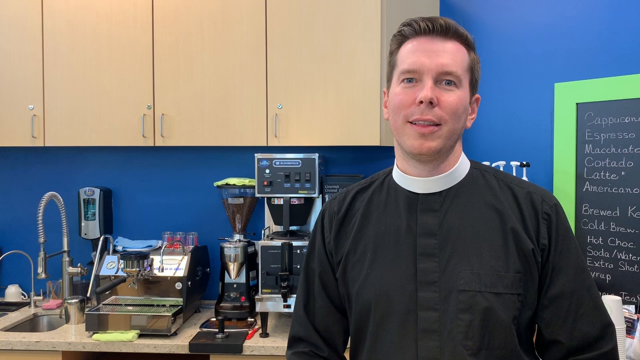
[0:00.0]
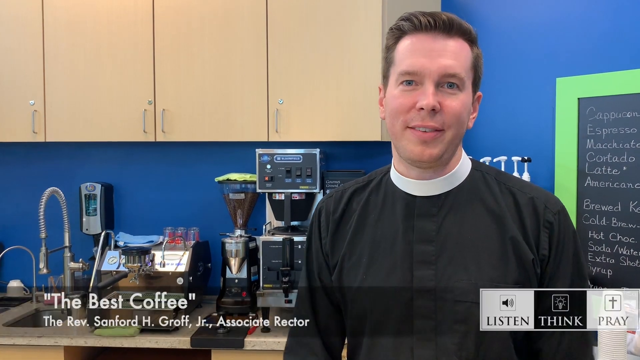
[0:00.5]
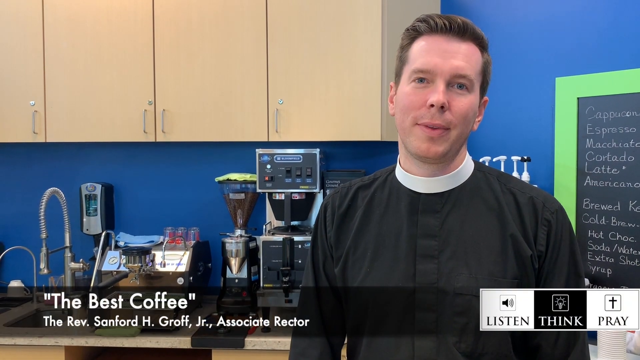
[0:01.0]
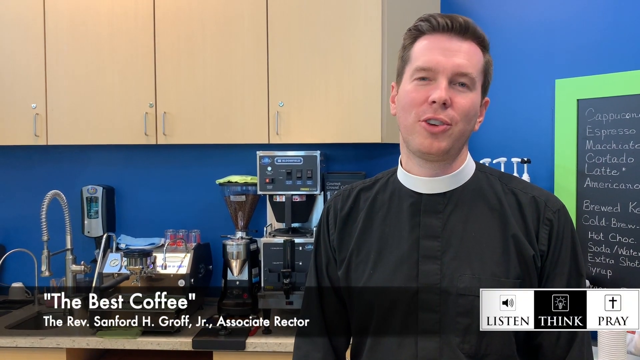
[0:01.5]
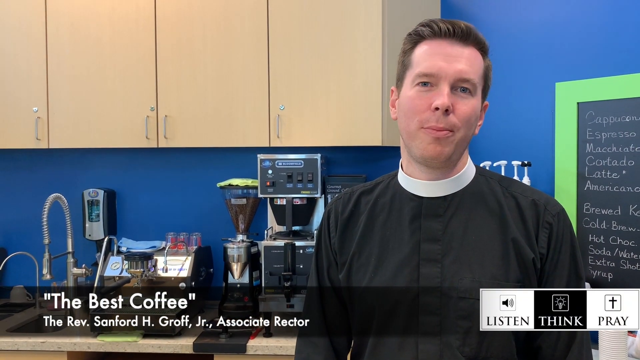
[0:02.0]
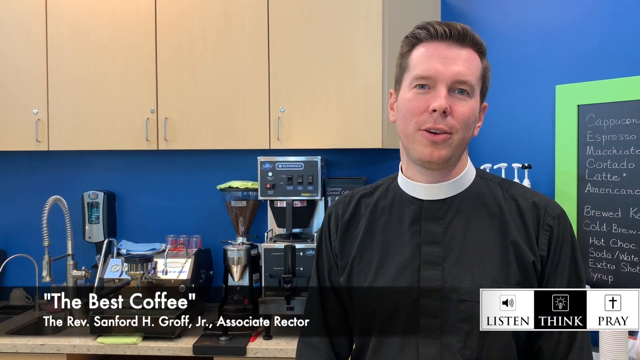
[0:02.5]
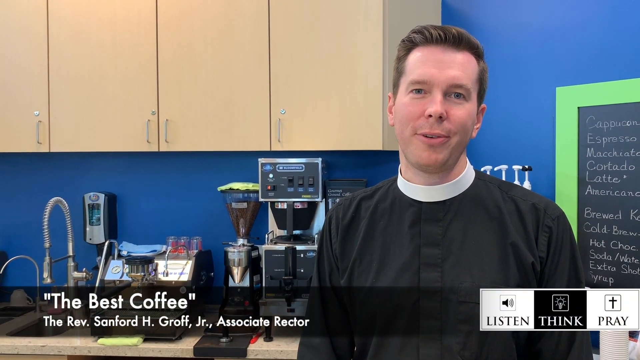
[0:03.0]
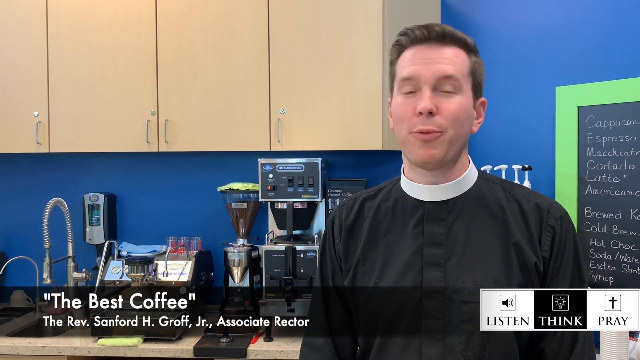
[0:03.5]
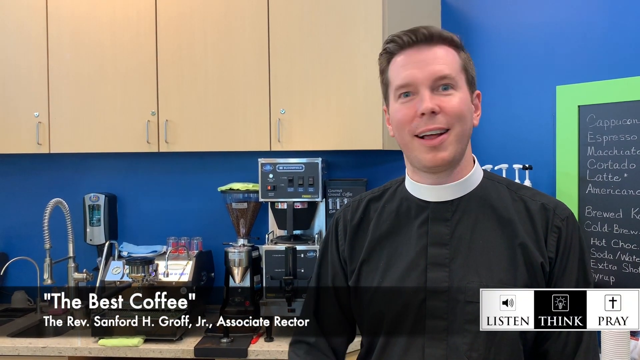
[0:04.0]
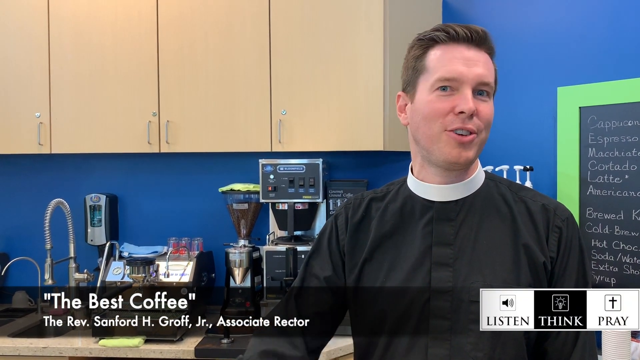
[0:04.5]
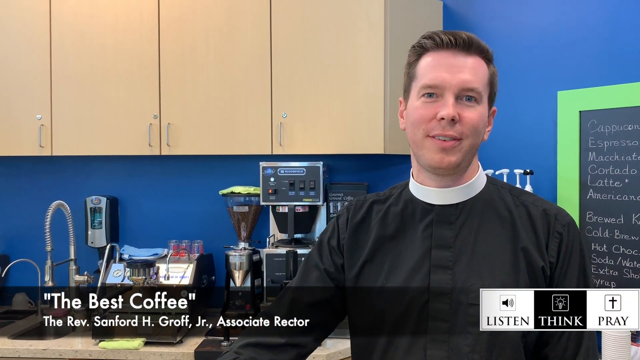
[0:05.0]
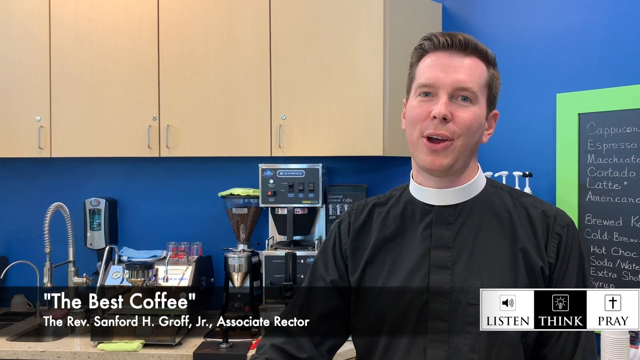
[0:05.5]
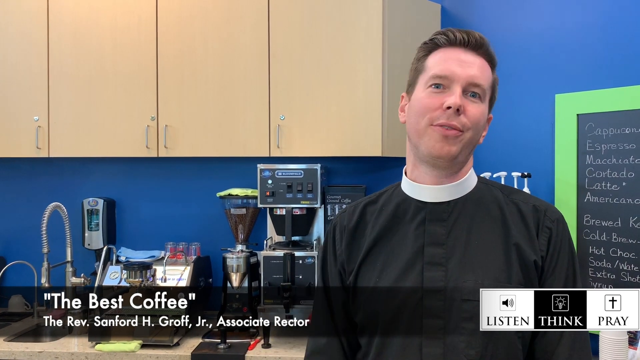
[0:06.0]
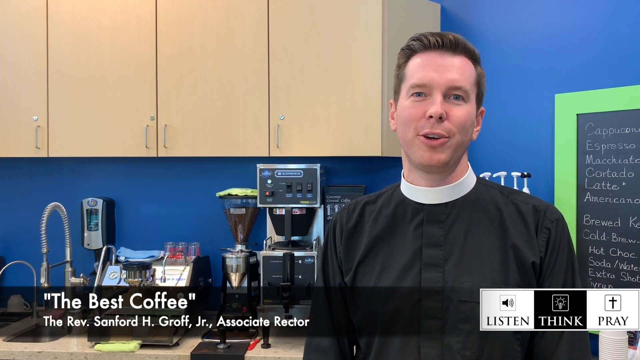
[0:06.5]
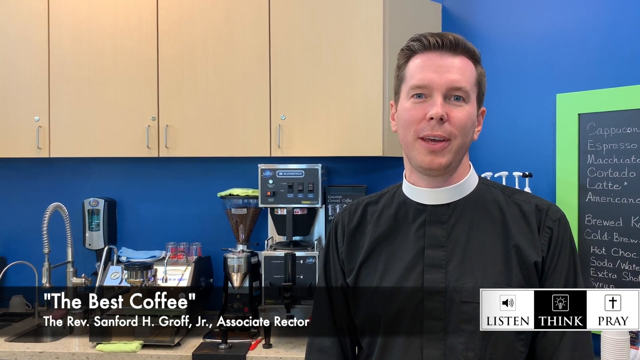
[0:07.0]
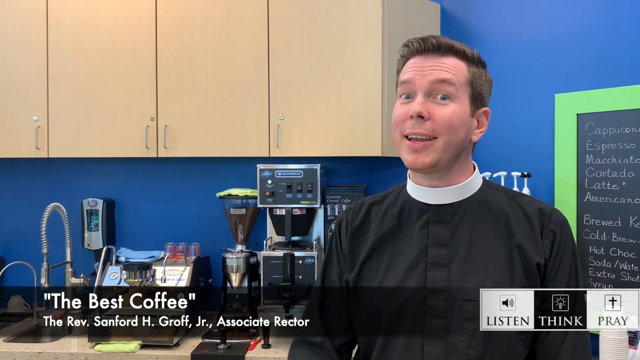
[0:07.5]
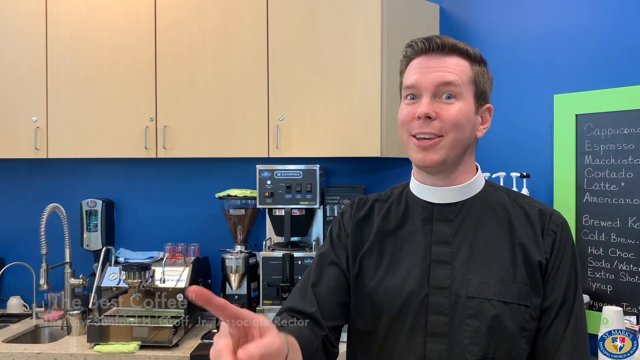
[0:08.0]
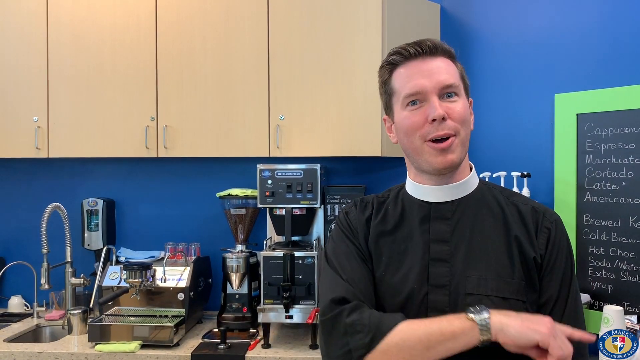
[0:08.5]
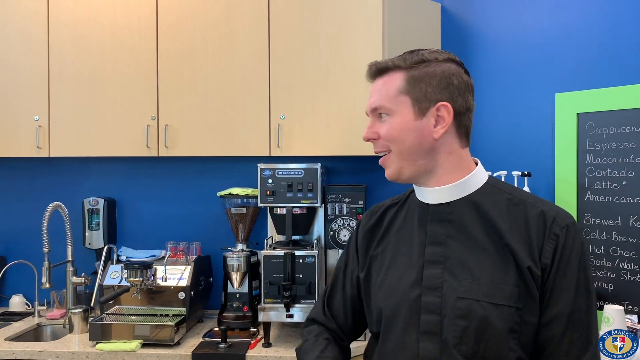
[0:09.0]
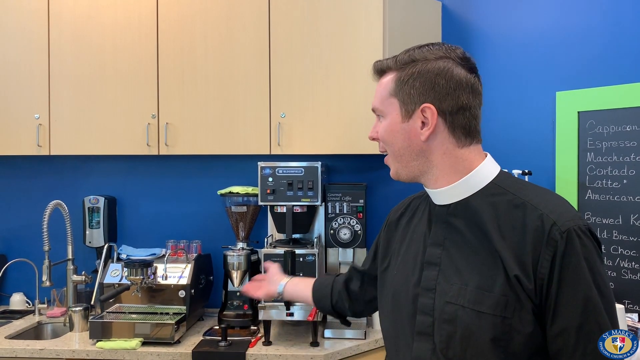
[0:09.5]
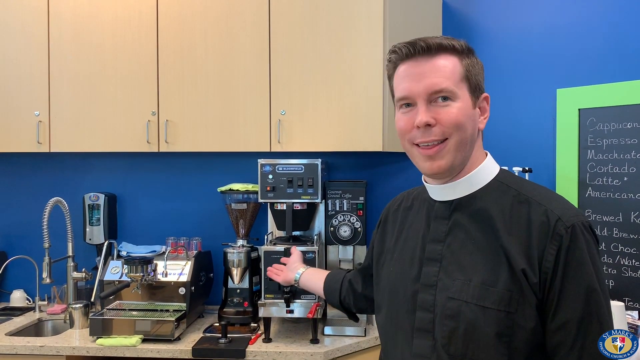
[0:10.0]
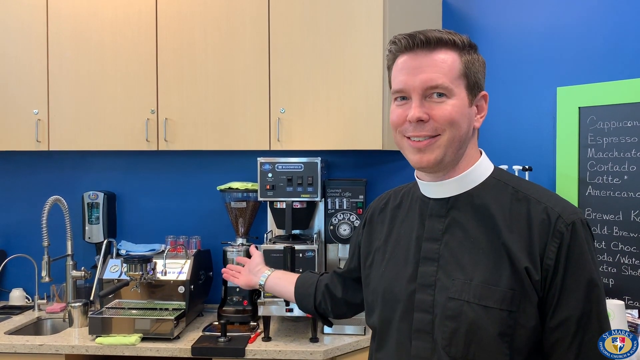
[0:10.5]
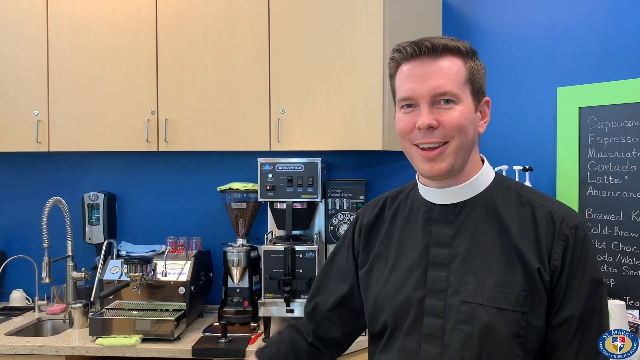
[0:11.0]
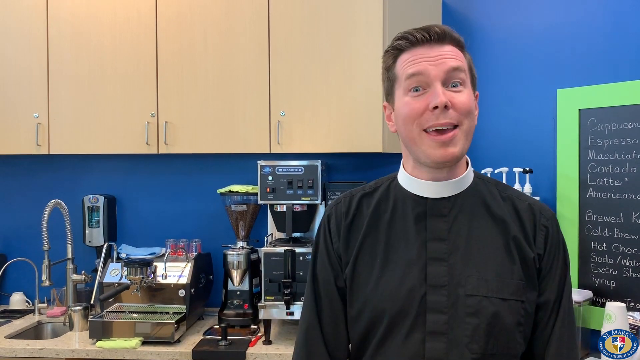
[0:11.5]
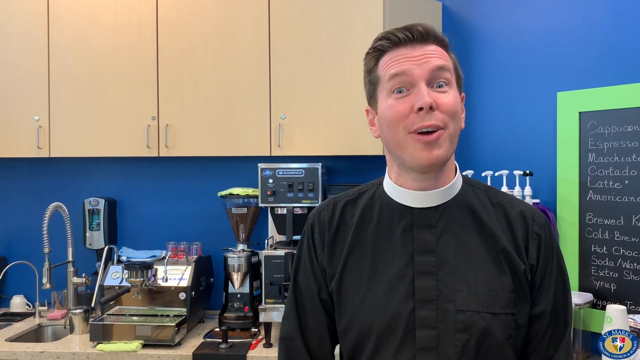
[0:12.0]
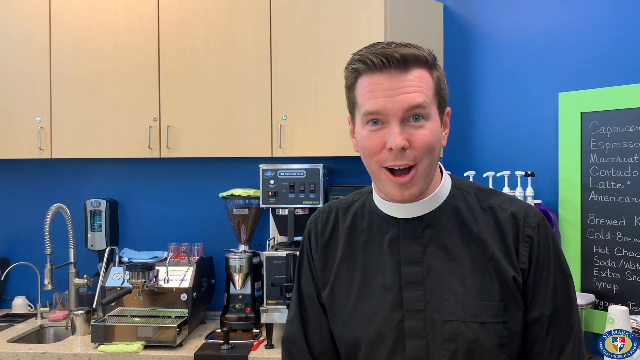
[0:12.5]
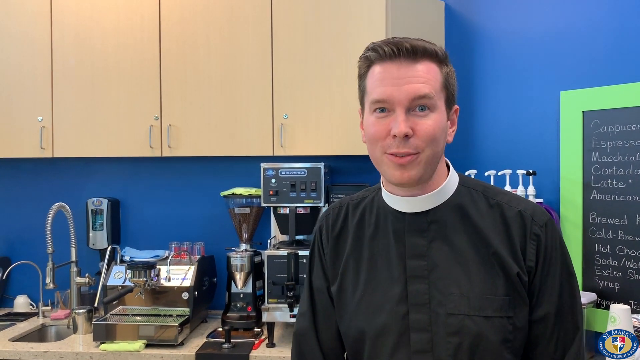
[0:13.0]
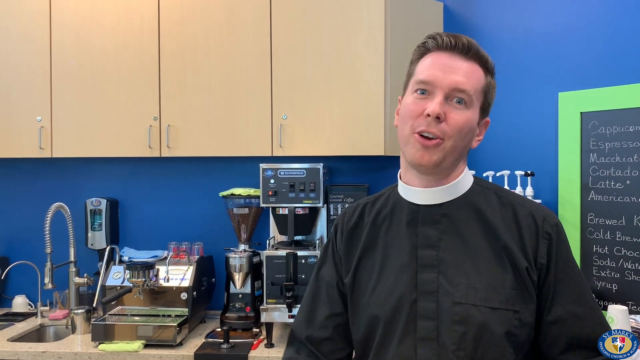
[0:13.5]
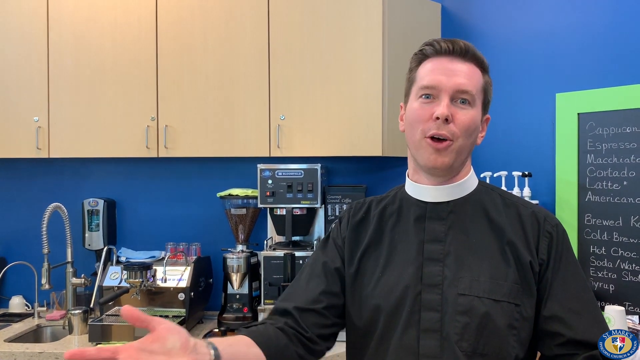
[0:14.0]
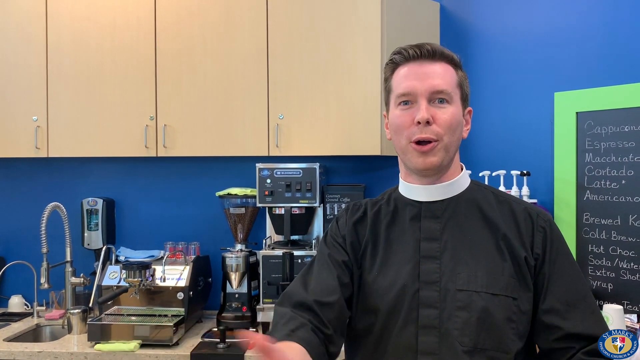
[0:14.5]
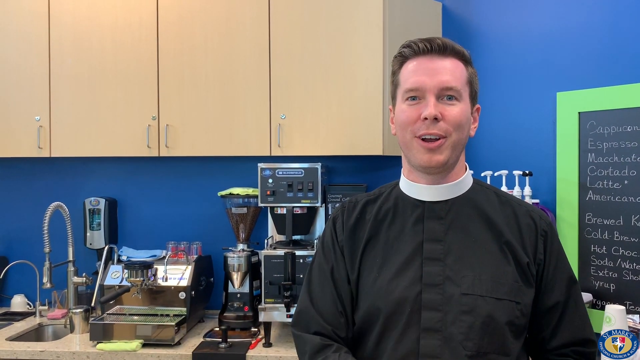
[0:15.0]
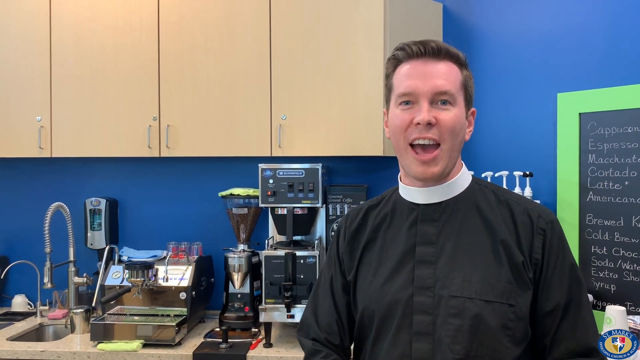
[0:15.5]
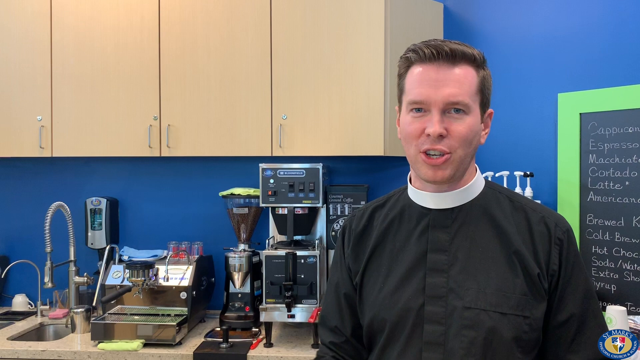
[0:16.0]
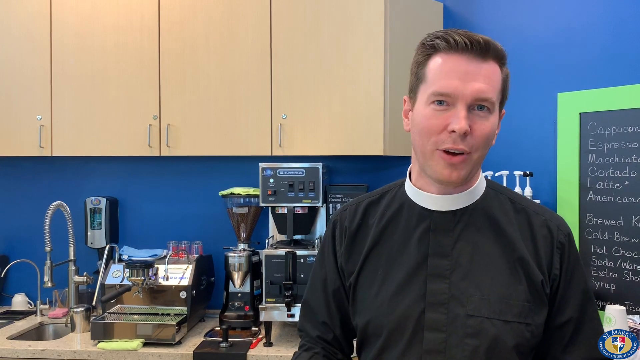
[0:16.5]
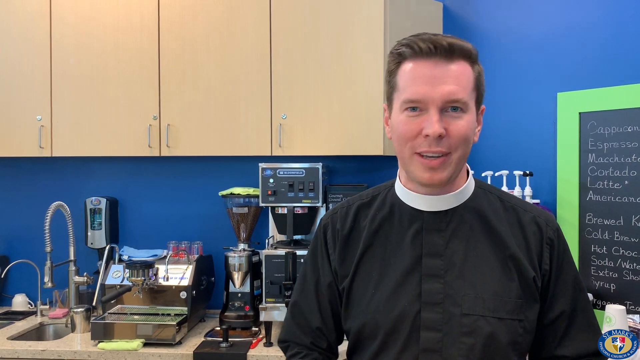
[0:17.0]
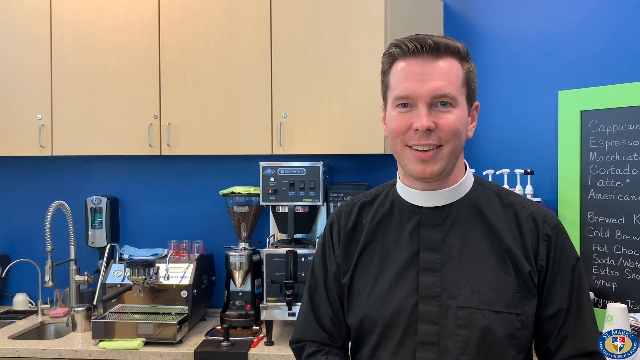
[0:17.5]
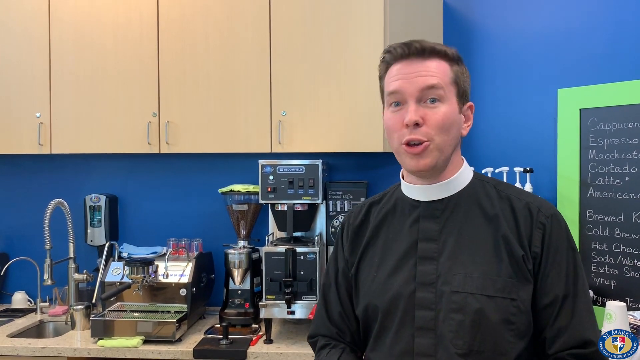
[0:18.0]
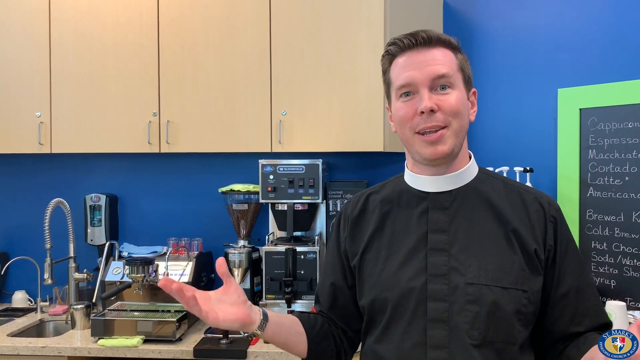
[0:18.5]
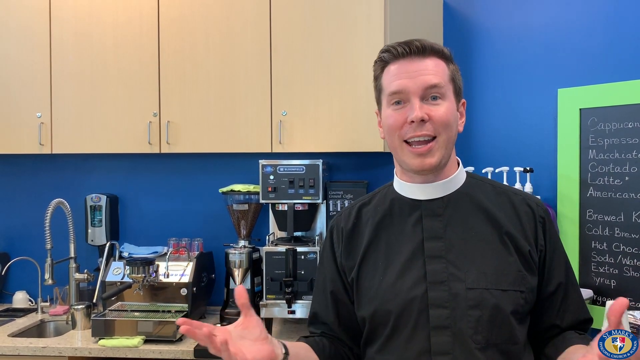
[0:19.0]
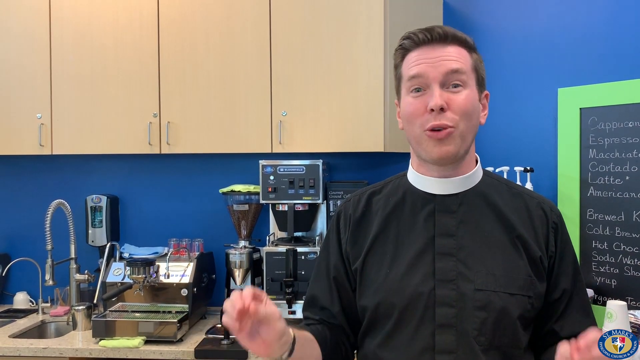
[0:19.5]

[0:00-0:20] The video is from the best coffee segment, featuring the Reverend Sanford H. Groff Jr., an associate director. A row of icons sits in the bottom right corner of the screen: one for listen, one for think and one for pray. He appears to be standing in an office break room. On the countertop behind him is a coffee machine or espresso machine, along with another machine for a beverage and a small sink; hand sanitizer is on the wall, and there are wooden cupboards. A row of syrup dispensers is also behind him. The Reverend is a white male wearing his priestly garb, and he looks very friendly. He points at the coffee machines behind him, three in total. Looking very inviting, he opens his arms out, shakes his head for a little bit, and sways his hands left and right.